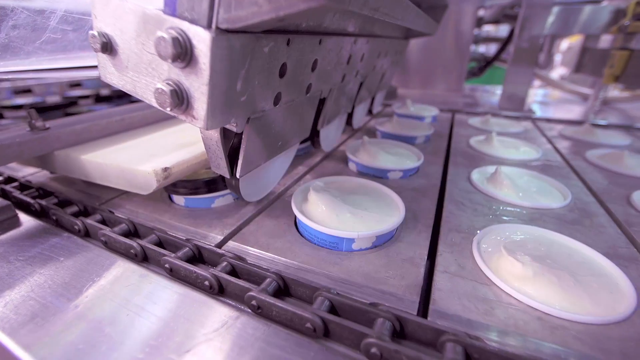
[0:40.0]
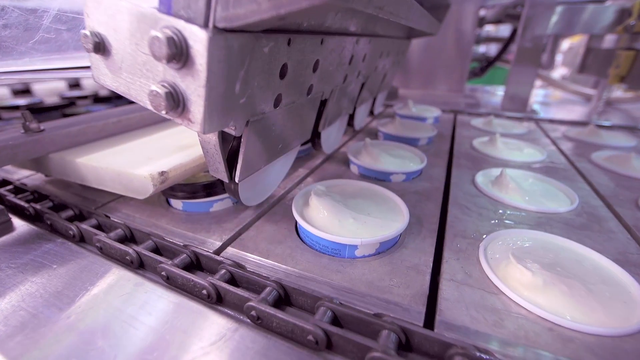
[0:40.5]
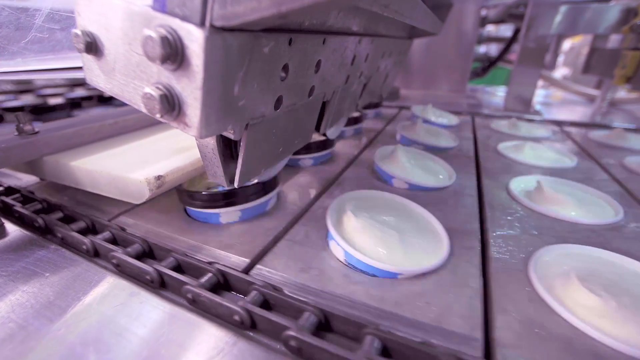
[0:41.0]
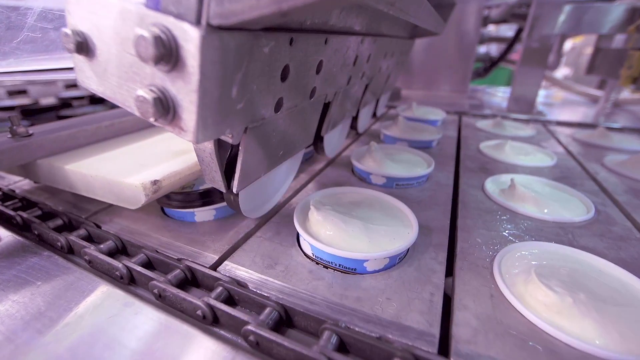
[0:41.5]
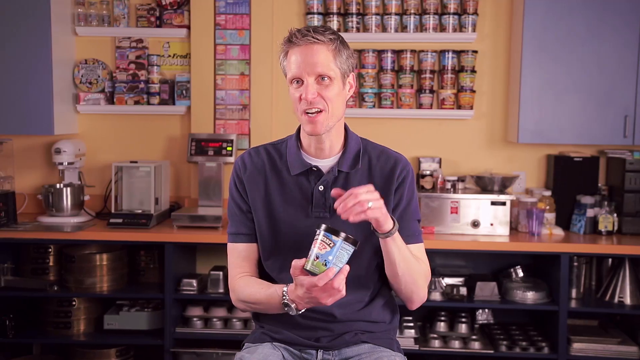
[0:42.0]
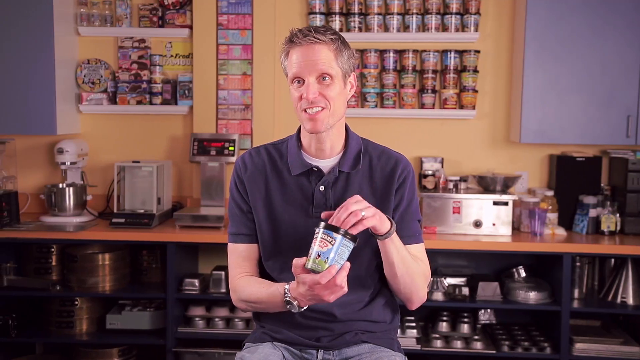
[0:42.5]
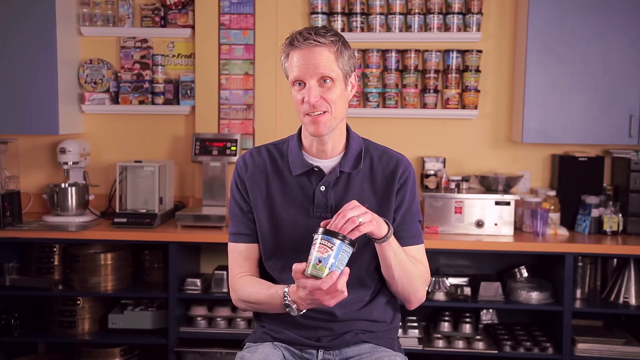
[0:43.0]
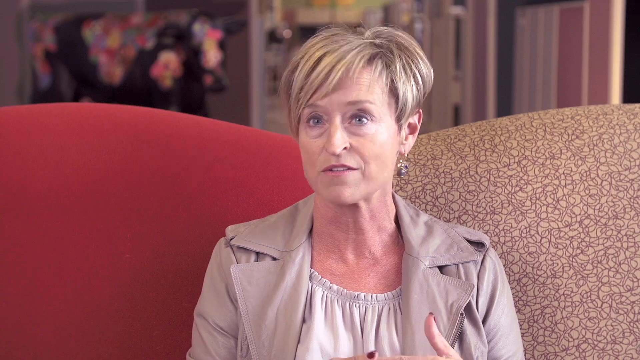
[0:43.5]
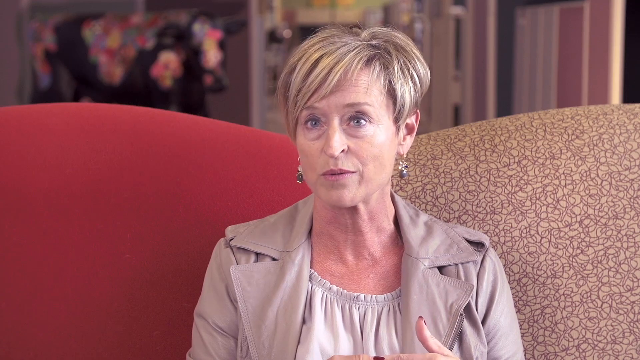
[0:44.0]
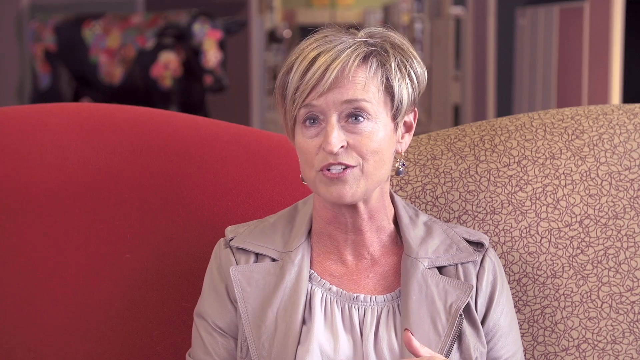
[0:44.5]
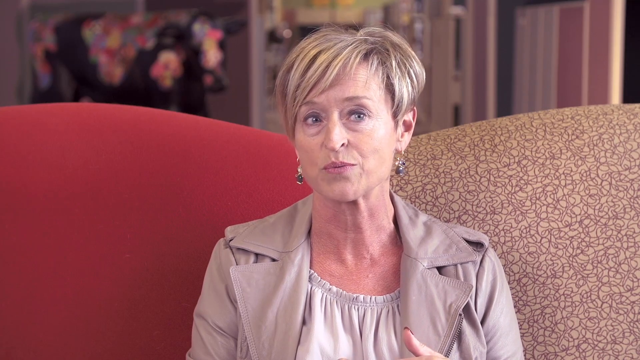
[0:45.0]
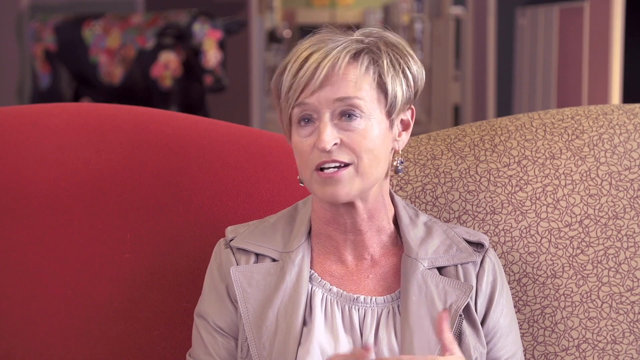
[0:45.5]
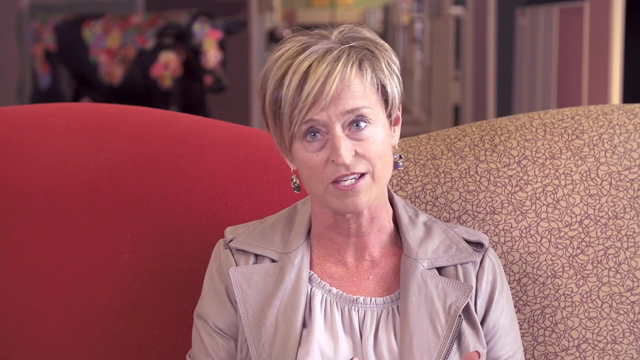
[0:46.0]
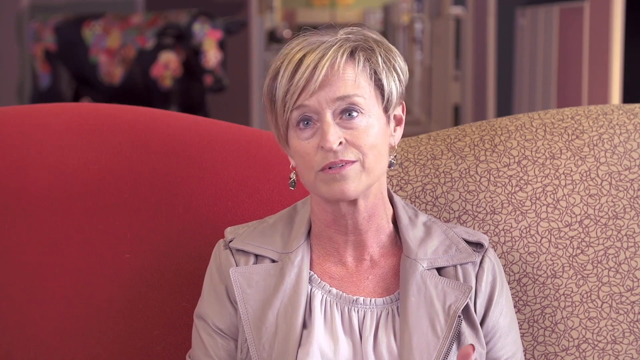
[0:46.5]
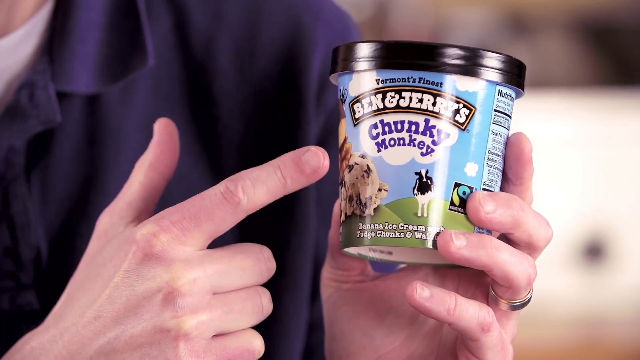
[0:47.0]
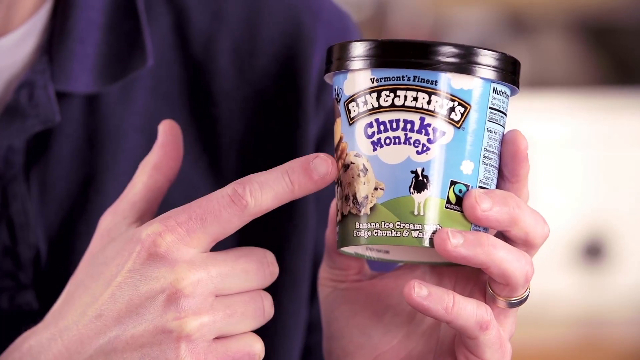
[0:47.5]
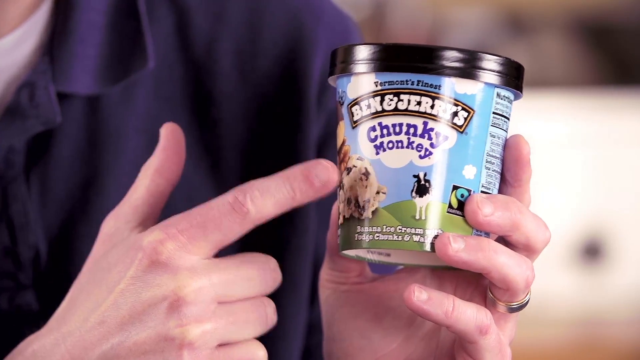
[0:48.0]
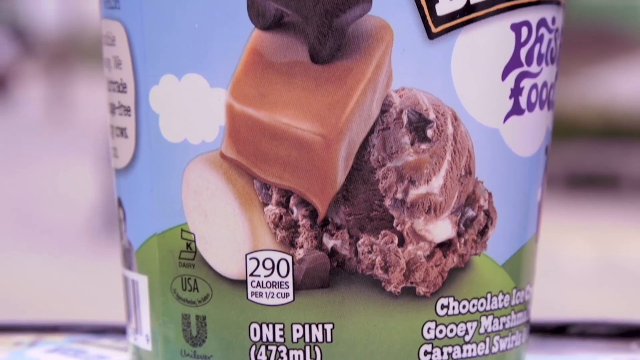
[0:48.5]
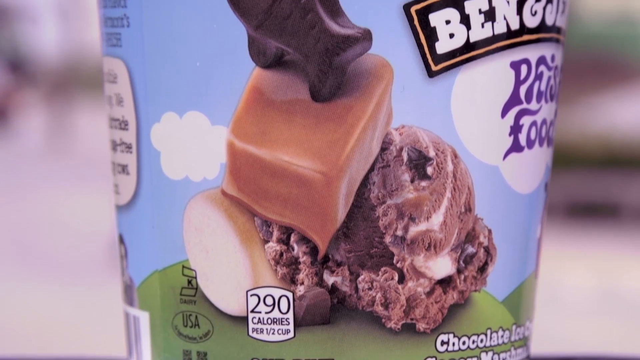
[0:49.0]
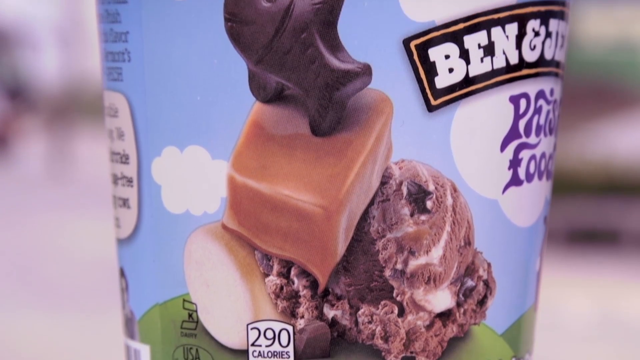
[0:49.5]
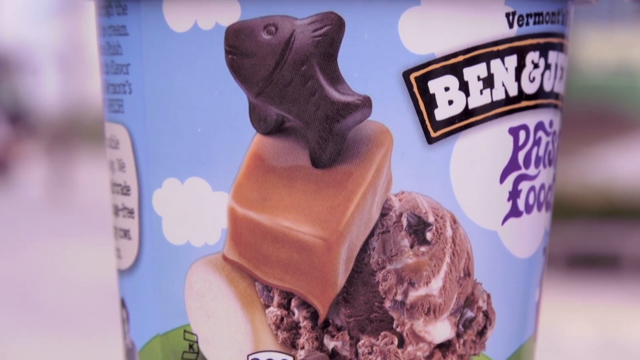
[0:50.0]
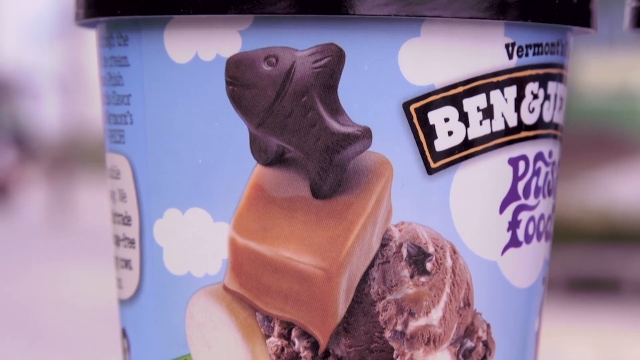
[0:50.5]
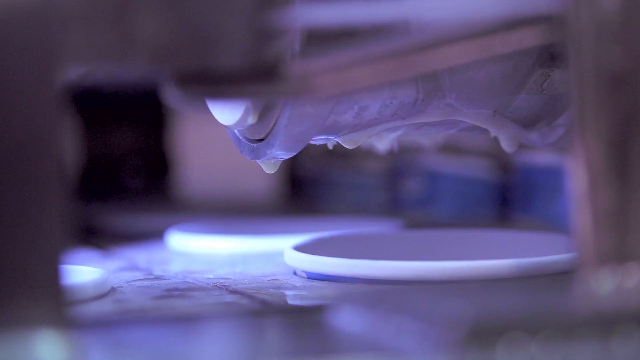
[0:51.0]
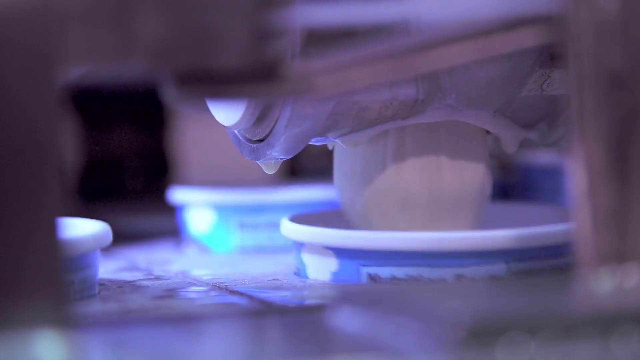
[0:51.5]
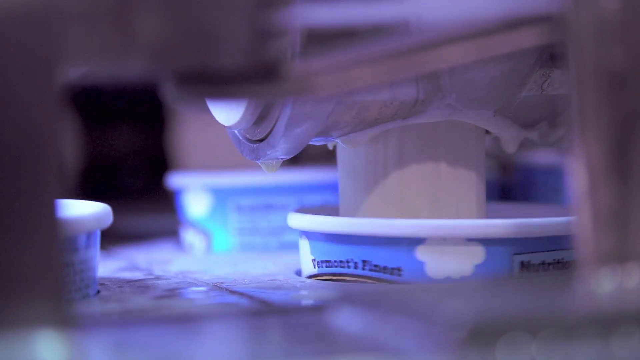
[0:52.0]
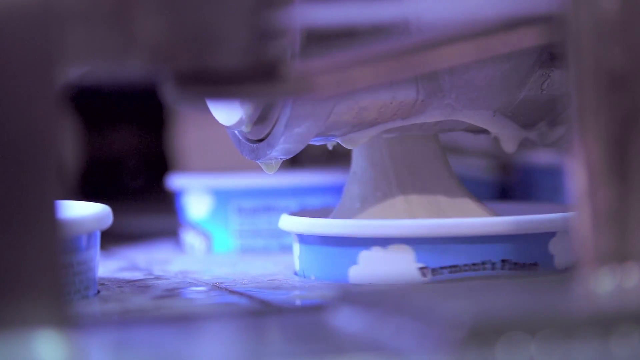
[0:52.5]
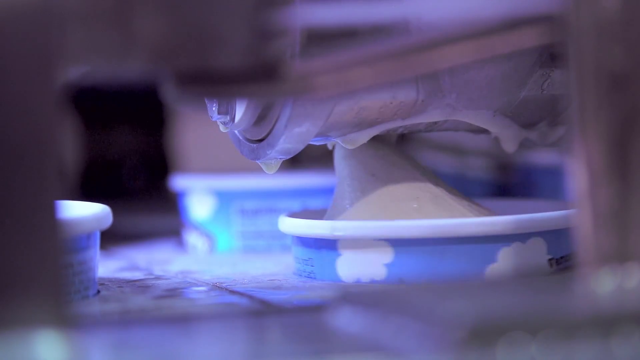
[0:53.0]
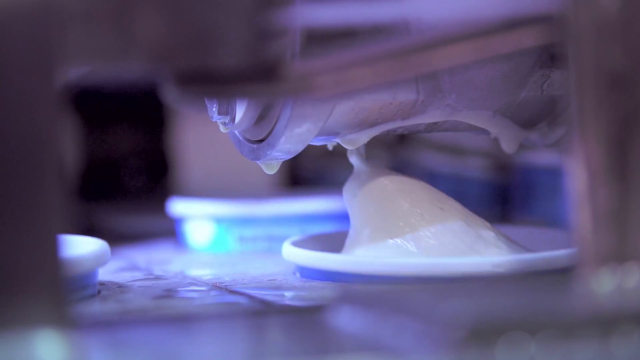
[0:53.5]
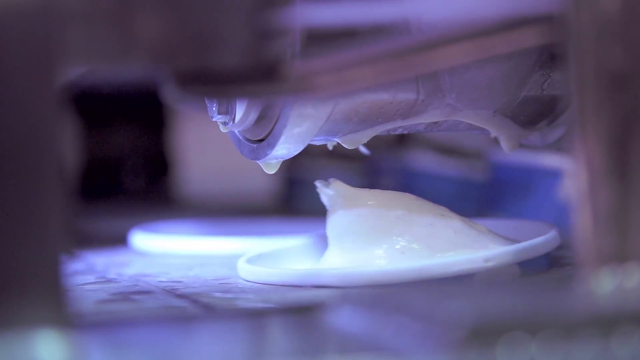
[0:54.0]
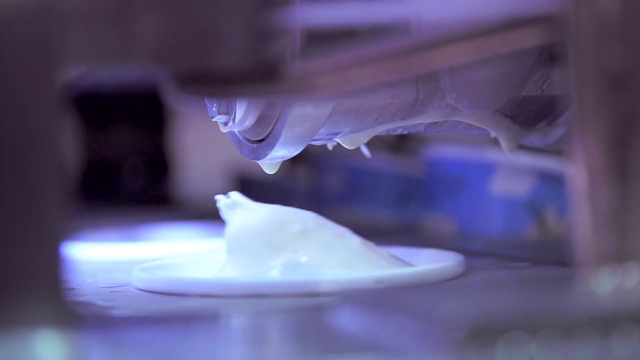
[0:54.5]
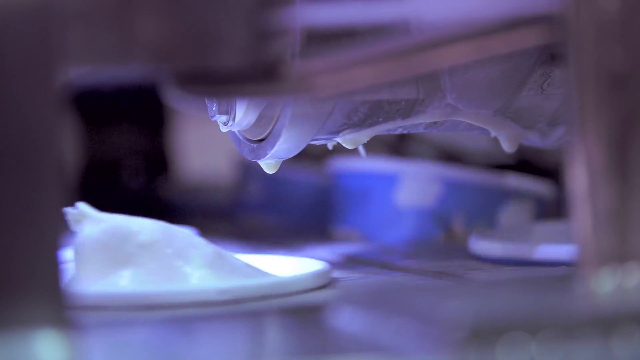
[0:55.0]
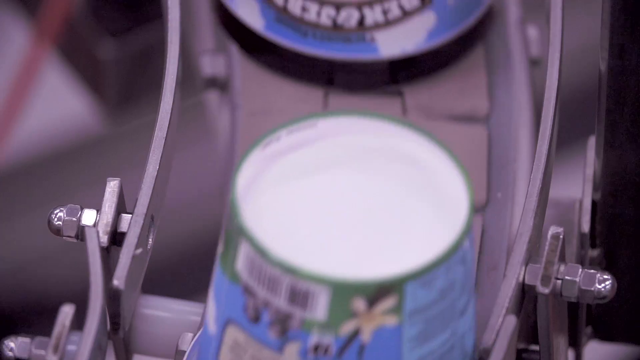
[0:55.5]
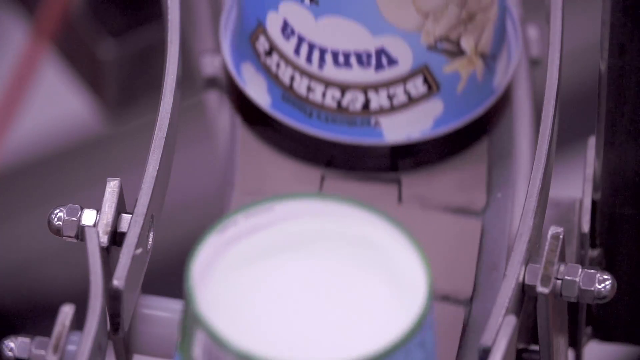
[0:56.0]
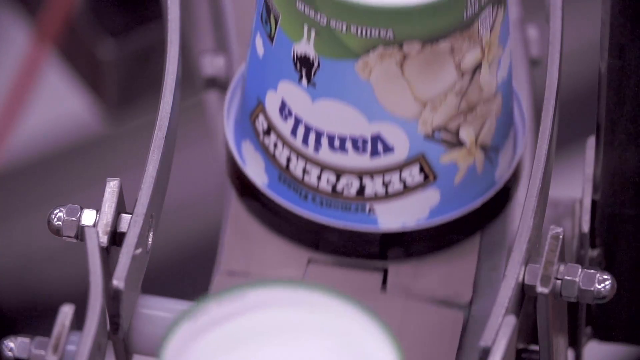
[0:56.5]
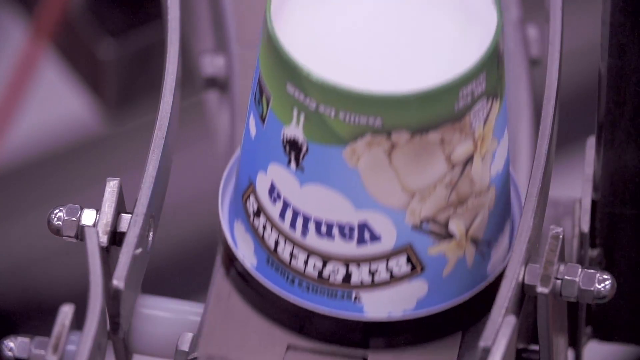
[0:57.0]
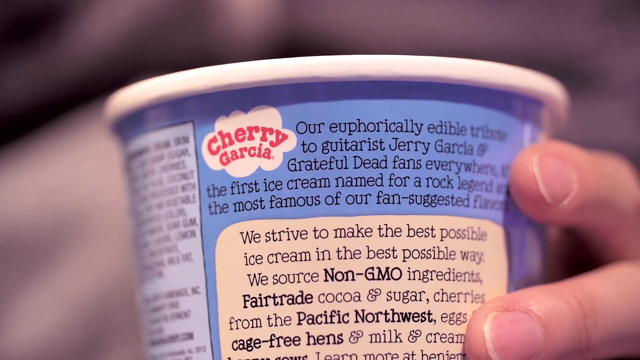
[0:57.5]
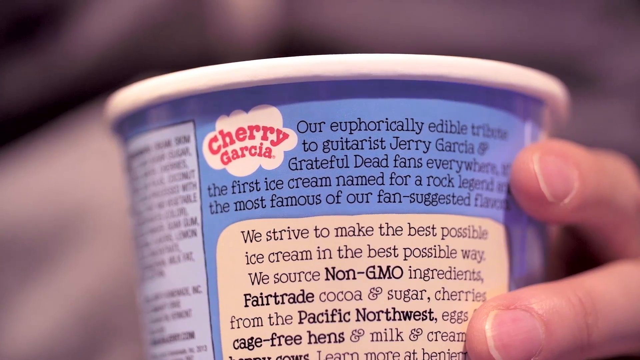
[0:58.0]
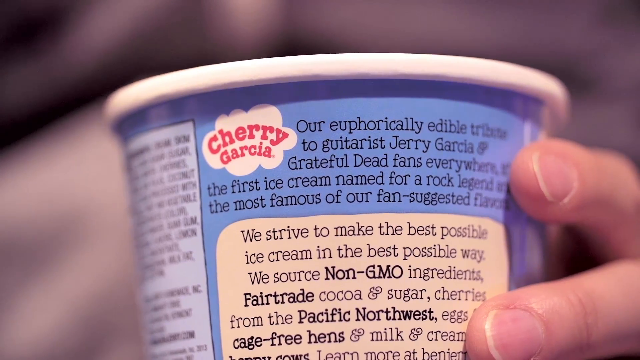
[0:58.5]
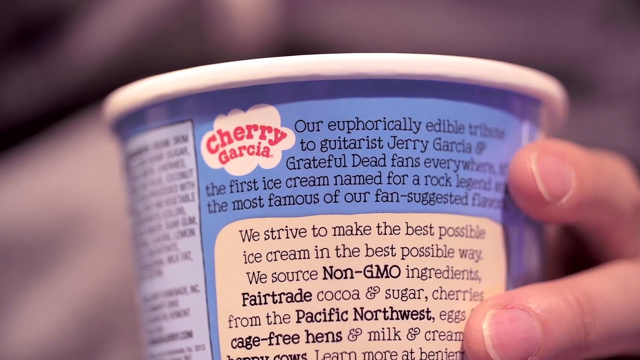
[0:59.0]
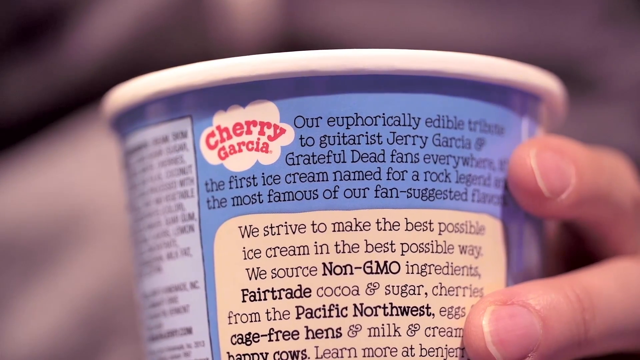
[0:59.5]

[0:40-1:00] The video moves to the factory, showing how the Ben & Jerry's pints are made, with lines of ice cream being made four deep. A gentleman at the ice cream shop, in his early 40s and Caucasian, with brown hair and a short-sleeved purple shirt, holds a pint of Ben & Jerry's in his hand and taps on its top. Next comes a Caucasian woman in her mid-40s with short brown hair and blue eyes, wearing a tan outfit. A close-up then shows a pint of Ben & Jerry's Chunky Monkey, banana ice cream with fudge chunks and wafers.